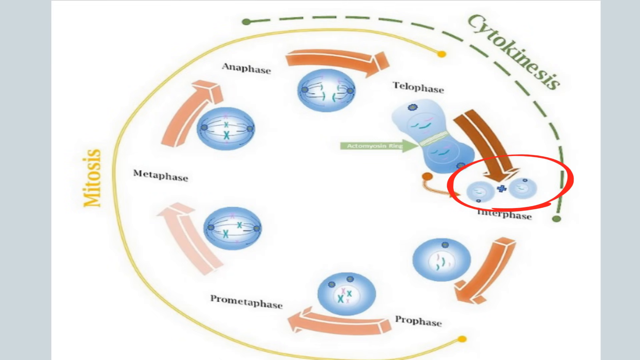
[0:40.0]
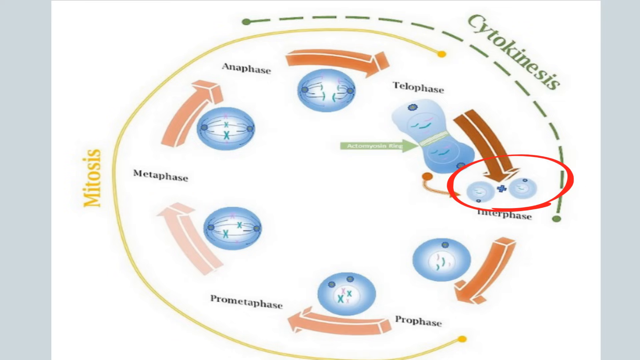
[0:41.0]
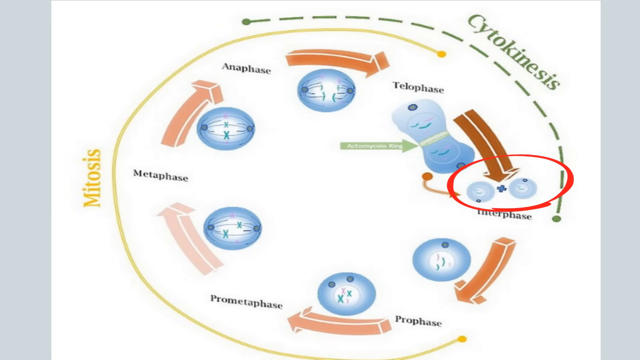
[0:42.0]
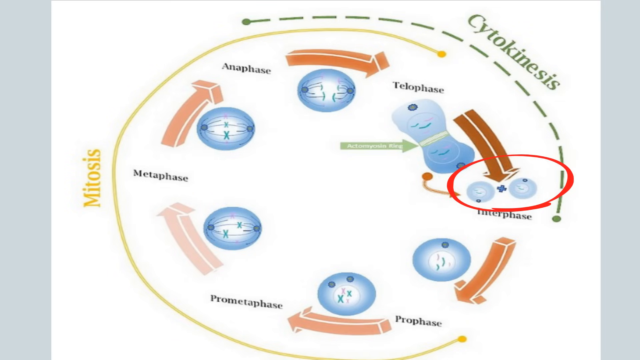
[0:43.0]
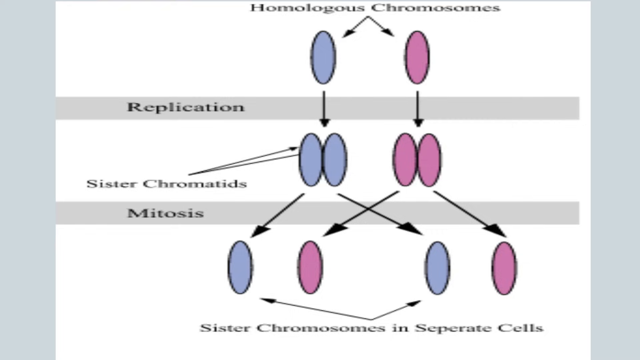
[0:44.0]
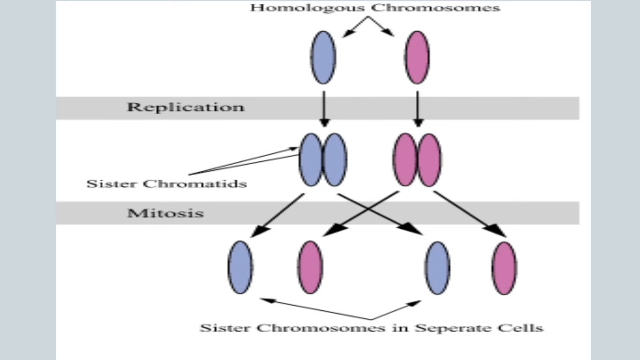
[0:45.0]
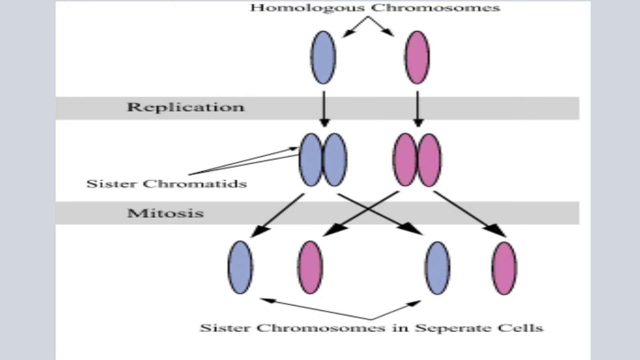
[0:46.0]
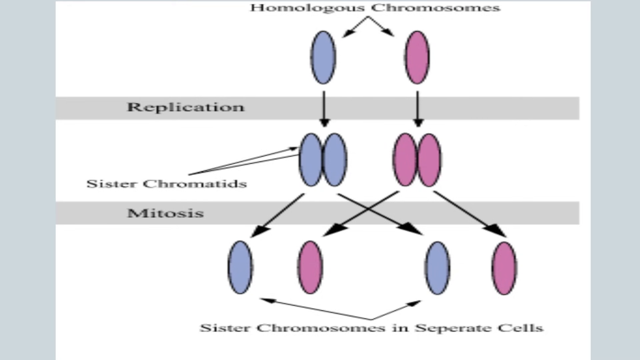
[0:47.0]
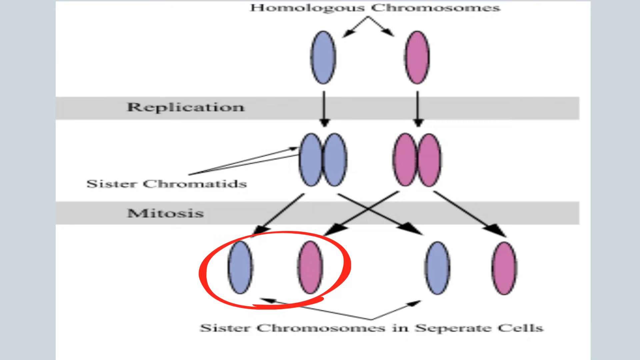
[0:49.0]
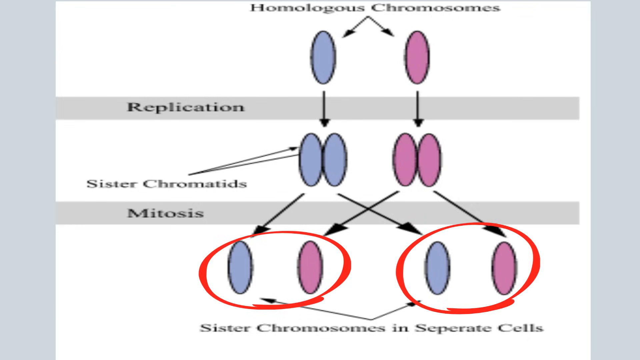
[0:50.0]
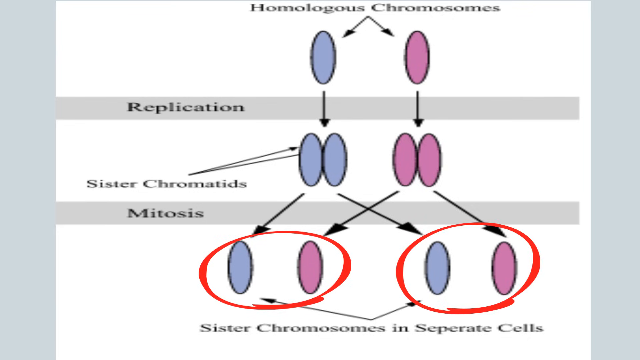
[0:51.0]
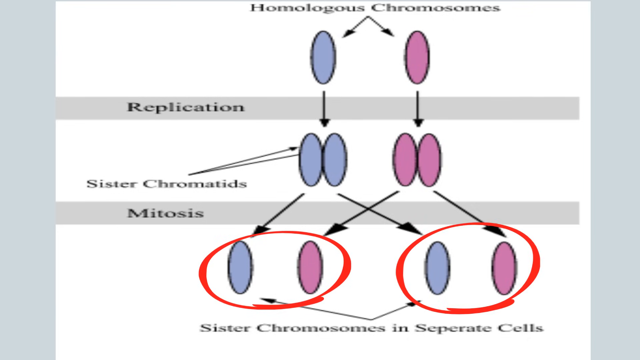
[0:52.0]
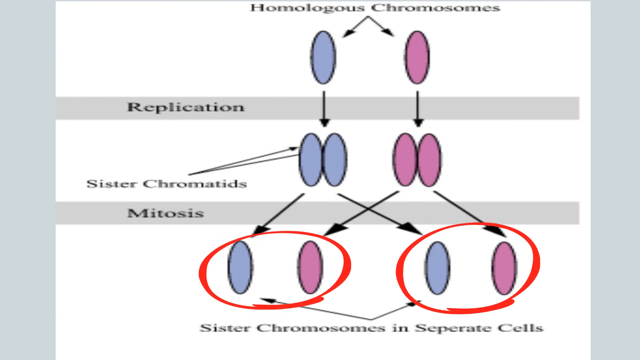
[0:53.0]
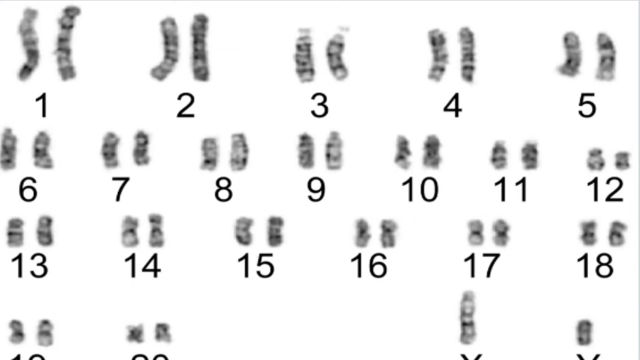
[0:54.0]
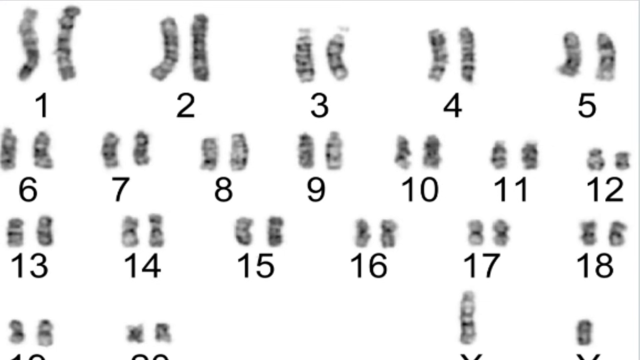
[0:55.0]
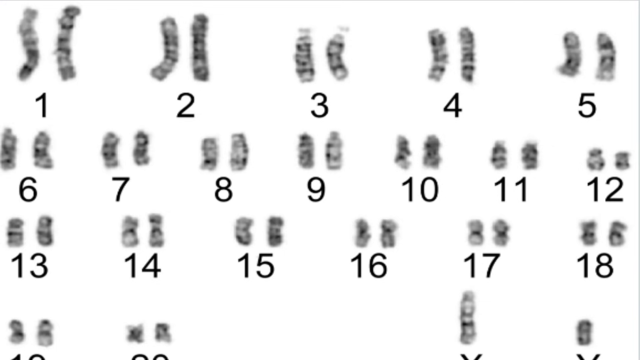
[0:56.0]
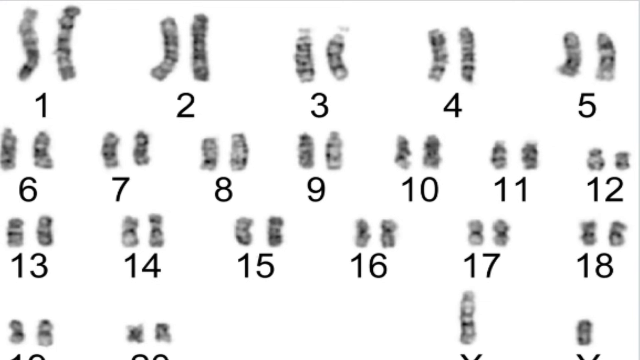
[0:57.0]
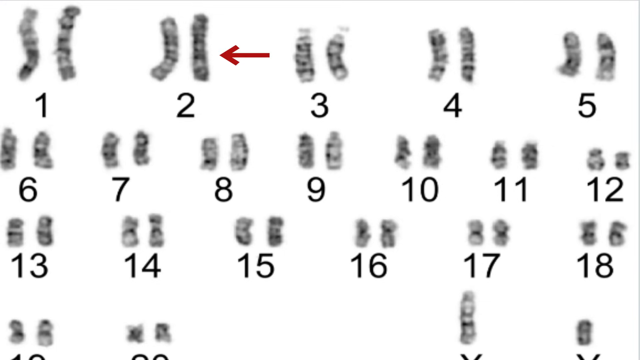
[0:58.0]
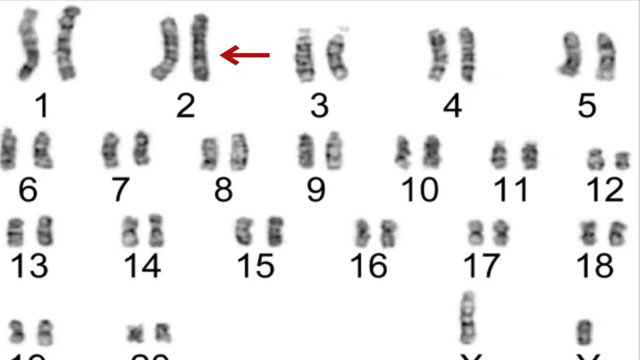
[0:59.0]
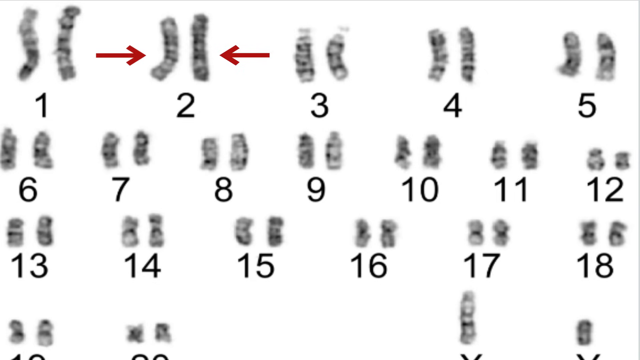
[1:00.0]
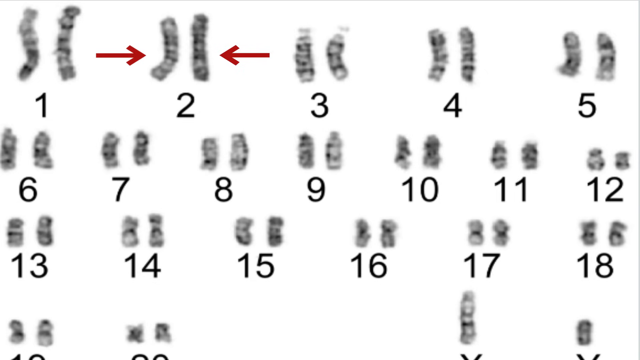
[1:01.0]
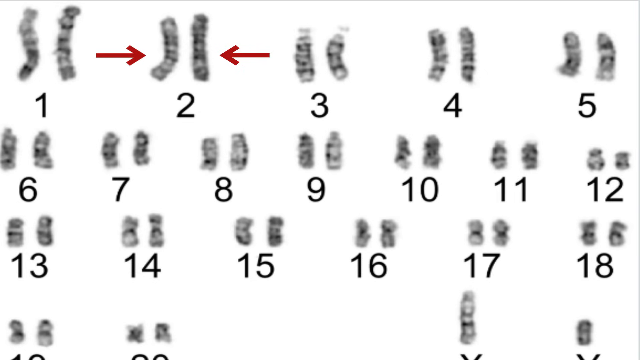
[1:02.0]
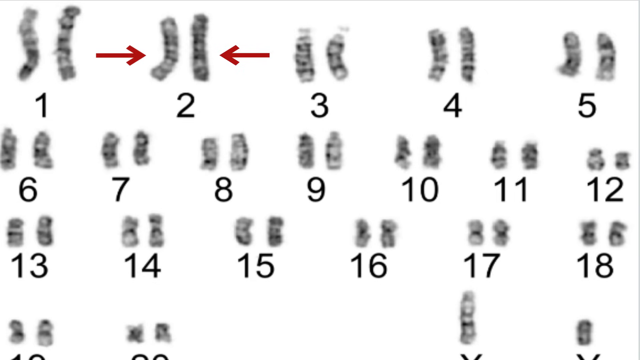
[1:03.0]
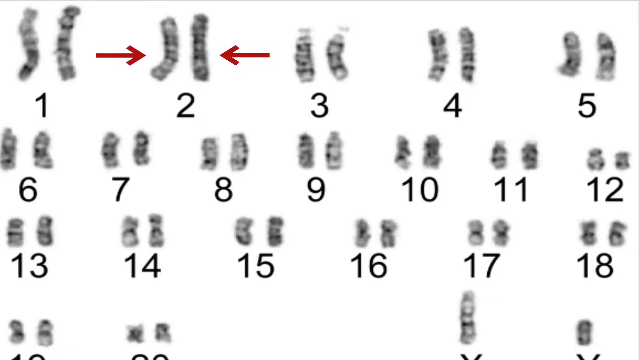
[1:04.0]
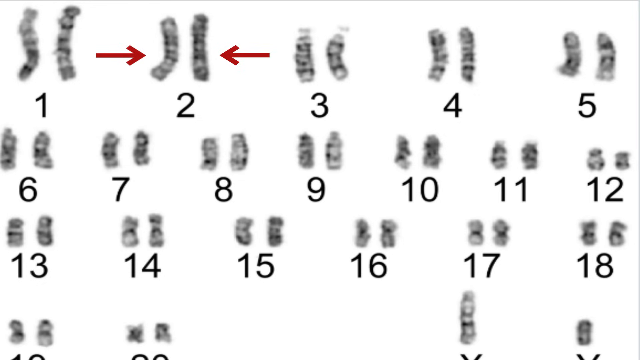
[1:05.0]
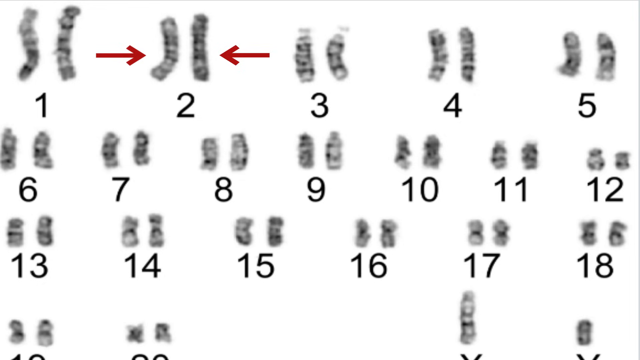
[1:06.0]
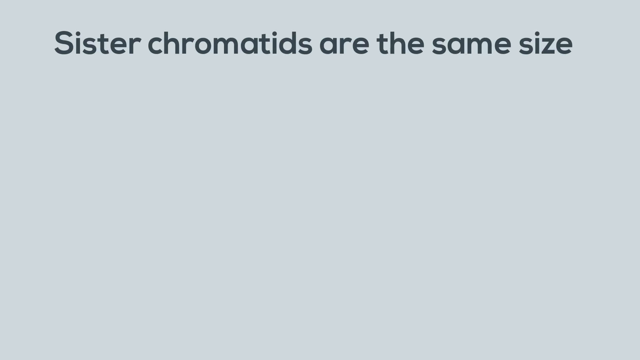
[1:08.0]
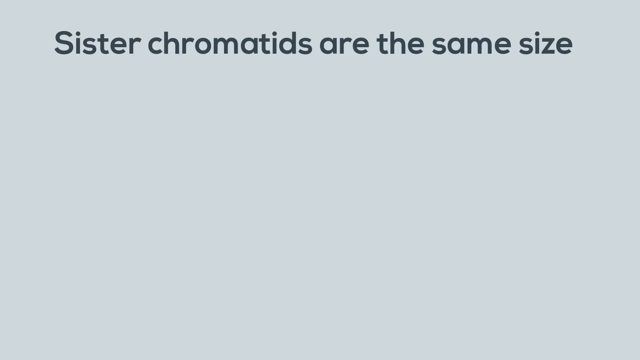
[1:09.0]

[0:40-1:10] The circular diagram remains on screen, highlighting sister chromosomes in separate cells. Numbers from 1 through 18 appear, apparently marking processes. Highlighted arrows point to the chromosomes and structures, showing how they are different sizes. The cellular reproductive cycle is shown, and in the end the sister chromatids are the same size. Different colors are used, and processes and their names are circled in red.